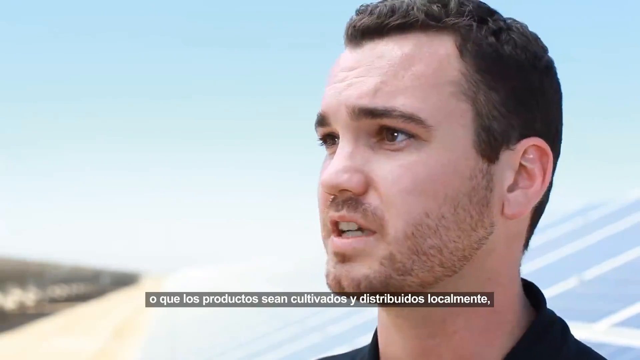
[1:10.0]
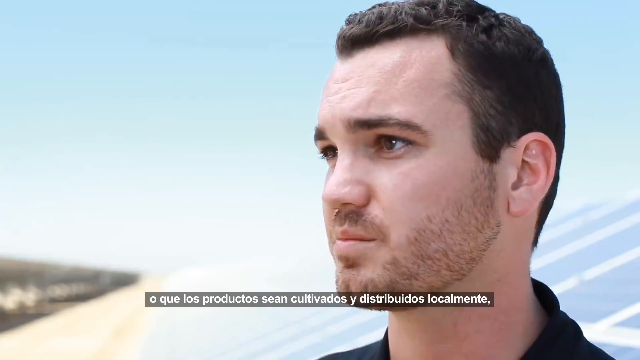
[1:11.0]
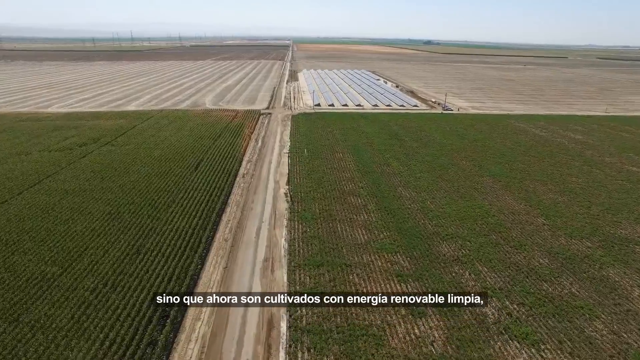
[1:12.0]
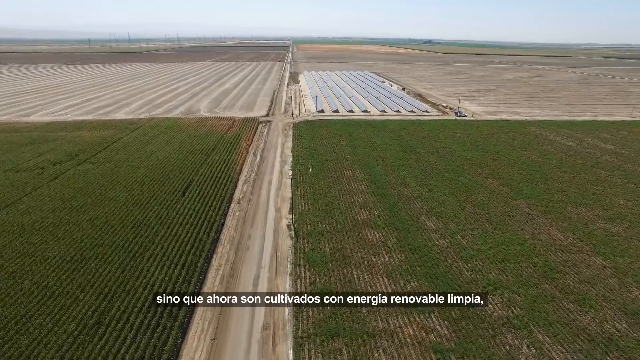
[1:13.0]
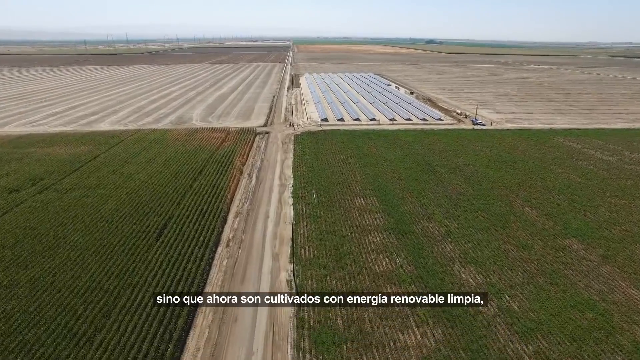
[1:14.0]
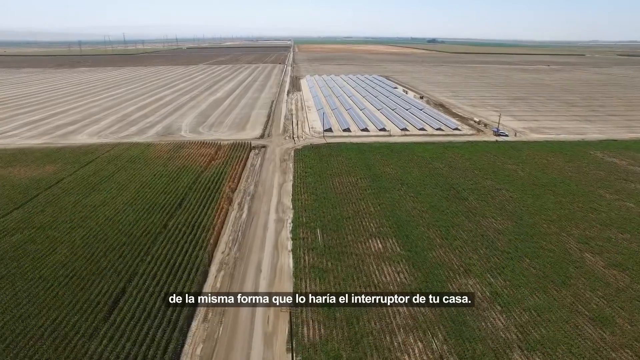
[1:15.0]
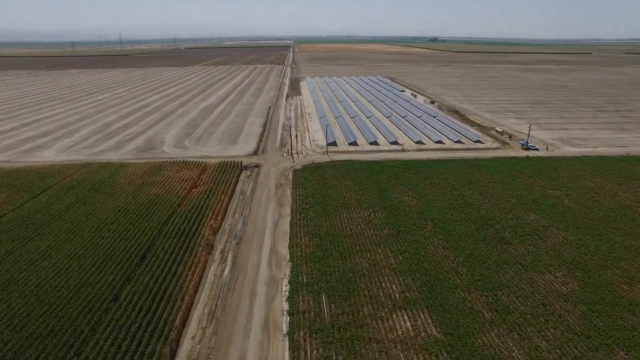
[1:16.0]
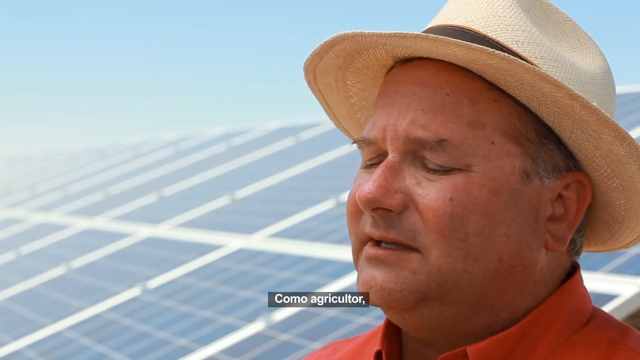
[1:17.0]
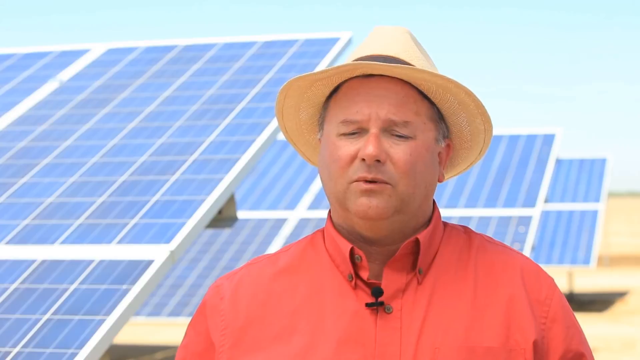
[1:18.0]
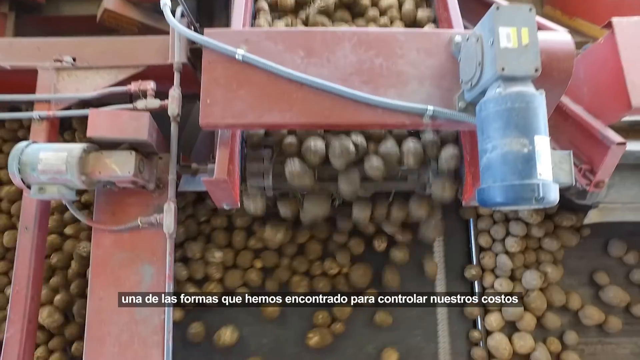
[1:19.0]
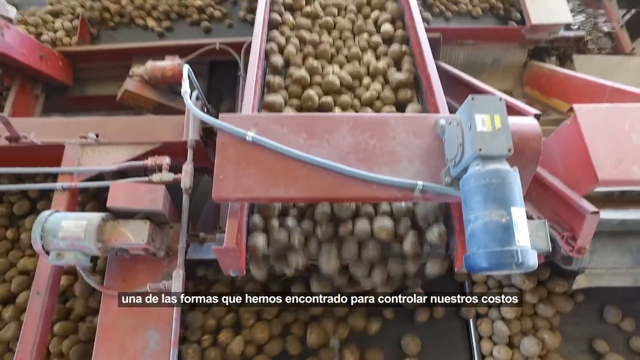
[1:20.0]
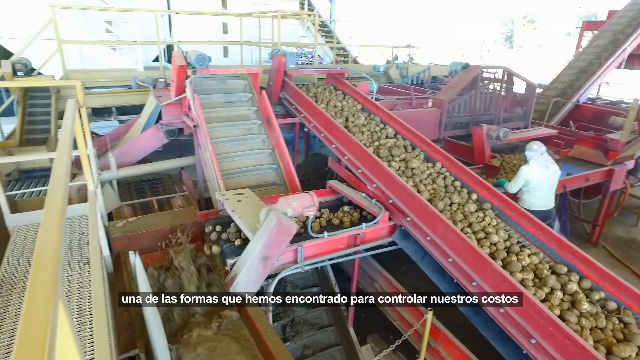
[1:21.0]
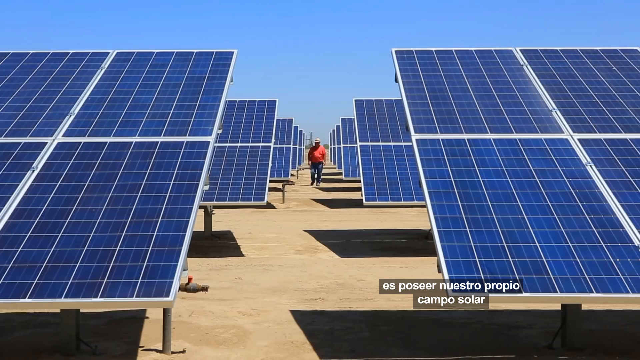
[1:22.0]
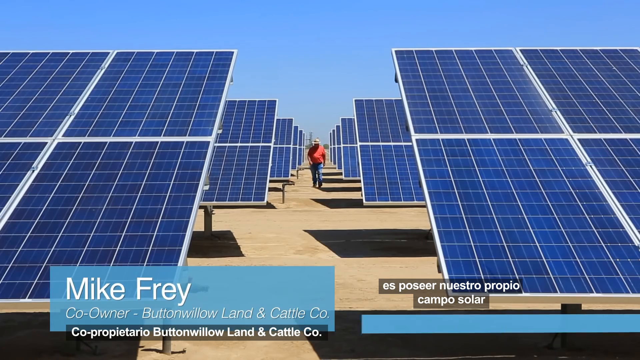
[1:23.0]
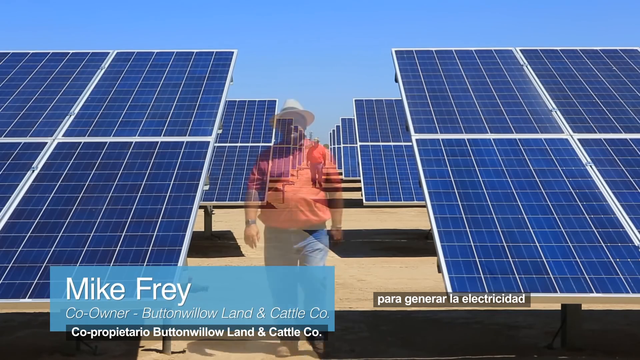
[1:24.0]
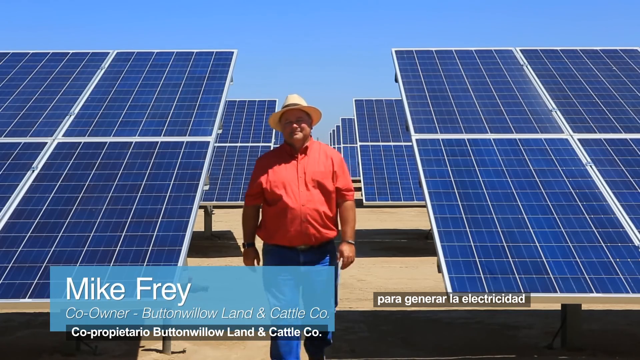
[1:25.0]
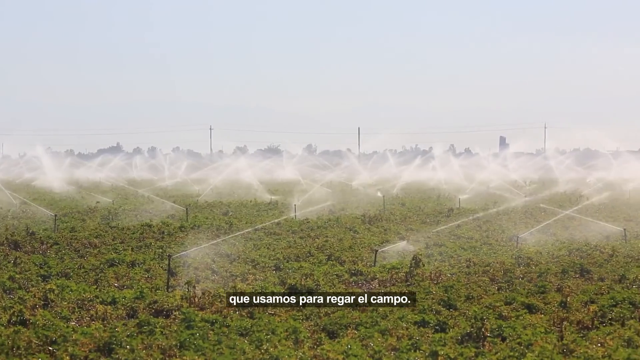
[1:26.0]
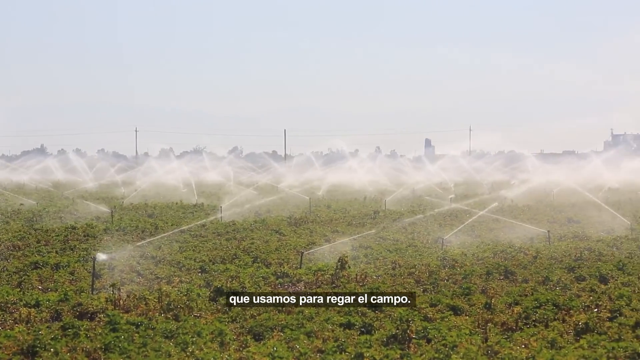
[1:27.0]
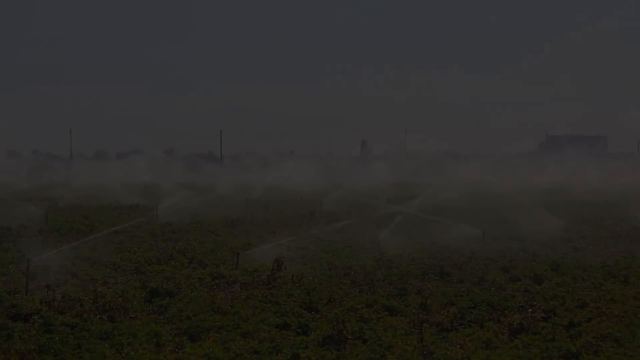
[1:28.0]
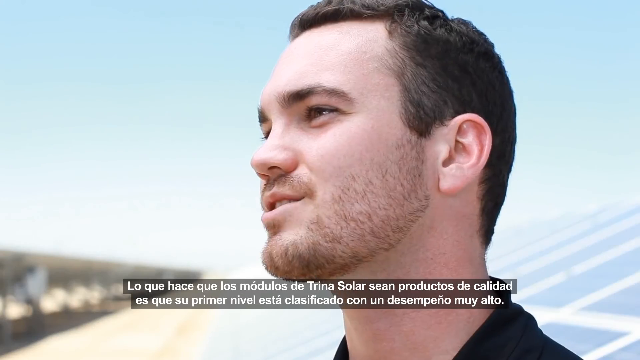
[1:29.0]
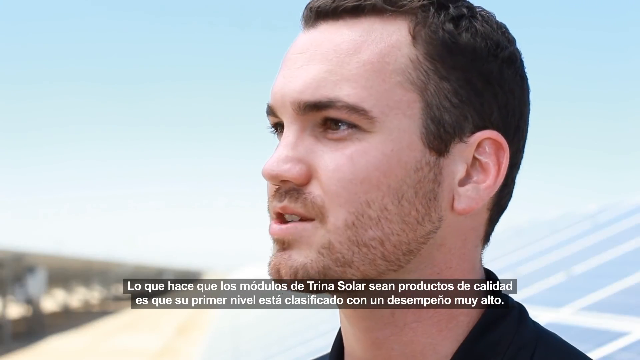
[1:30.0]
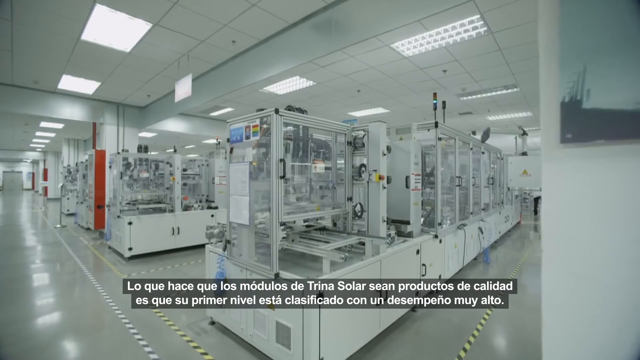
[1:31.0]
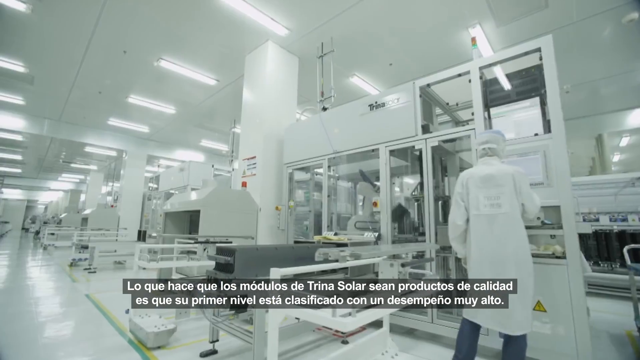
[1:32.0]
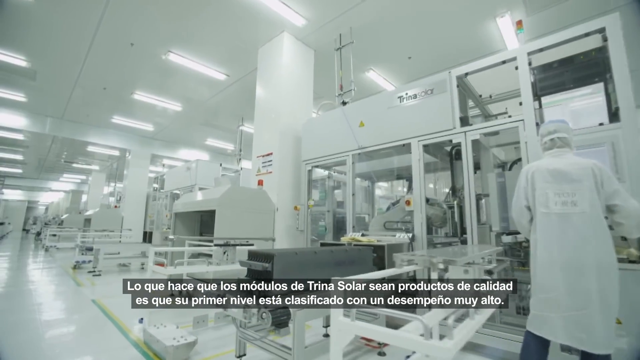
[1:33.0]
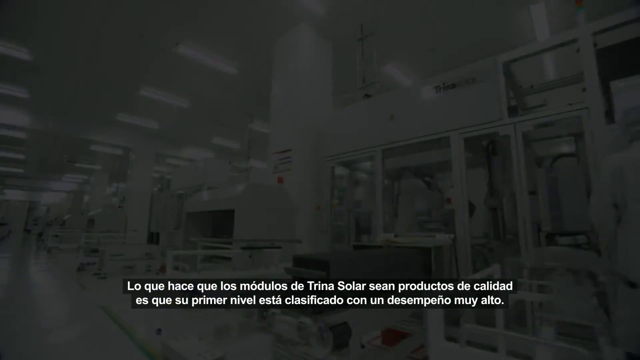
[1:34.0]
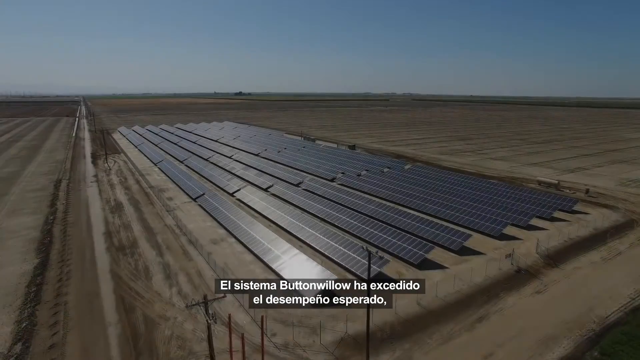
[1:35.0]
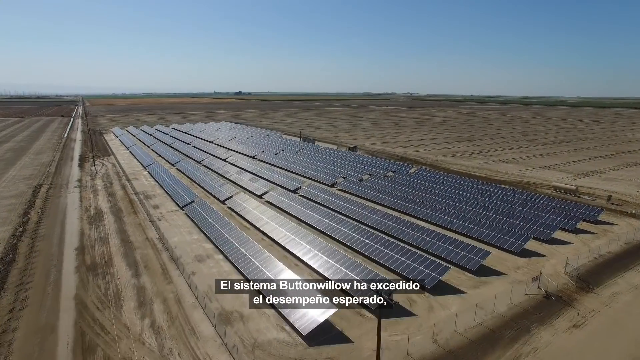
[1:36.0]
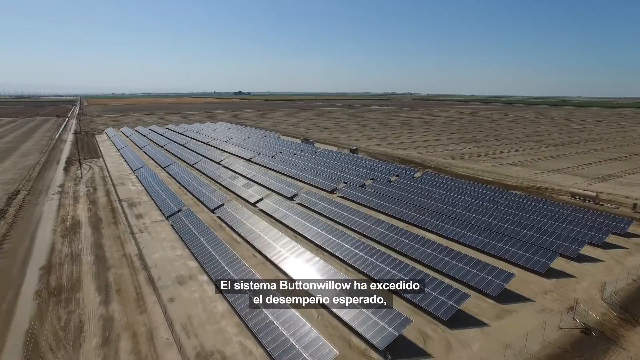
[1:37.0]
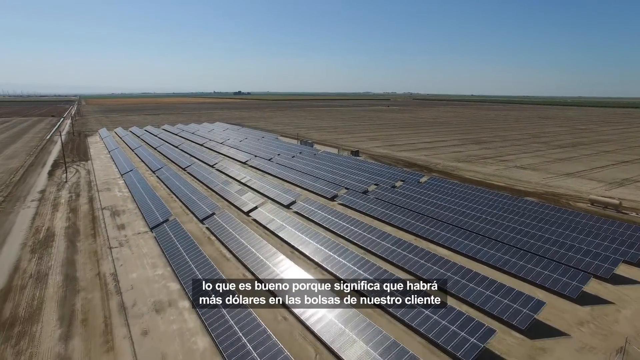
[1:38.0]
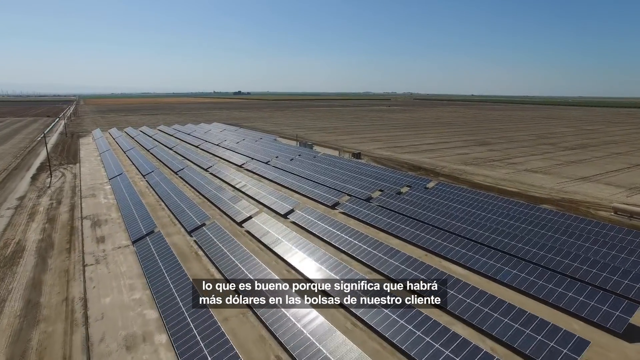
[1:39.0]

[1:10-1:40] Chad Cummings remains on screen, with the camera now close to his face as he speaks to the camera. He has dark brown hair and beard stubble, and there is a blue background and a blue sky behind him. The video cuts to a drone shot of massive farm fields: two large fields, one on the left and one on the right. Past those fields there is dirt with what looks to be some type of solar panels planted across long ranges of it. Next, someone wearing a hat and an orange dress shirt speaks to the camera, with solar panels all around him and to his left. The video then cuts to what looks to be a potato factory, where potatoes go through machinery, getting pulled, moved, and shifted into different areas of the factory.